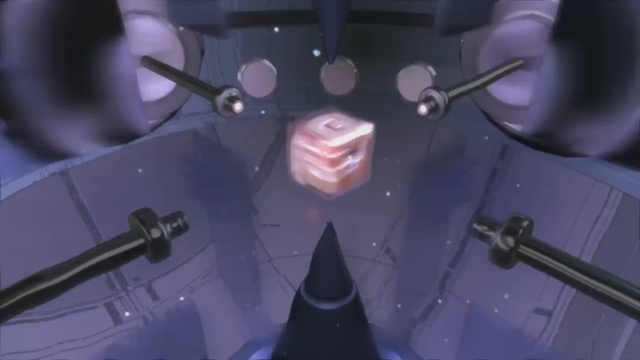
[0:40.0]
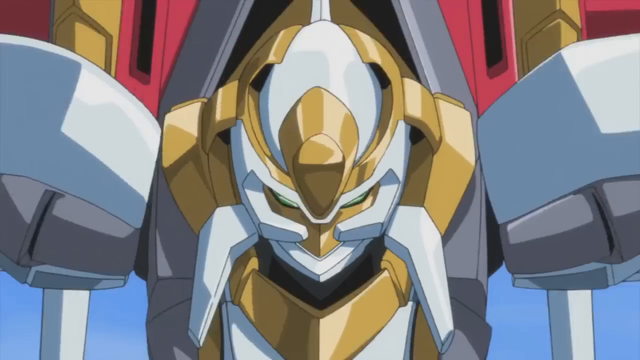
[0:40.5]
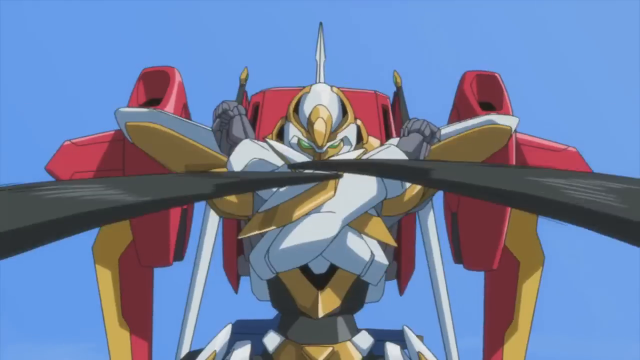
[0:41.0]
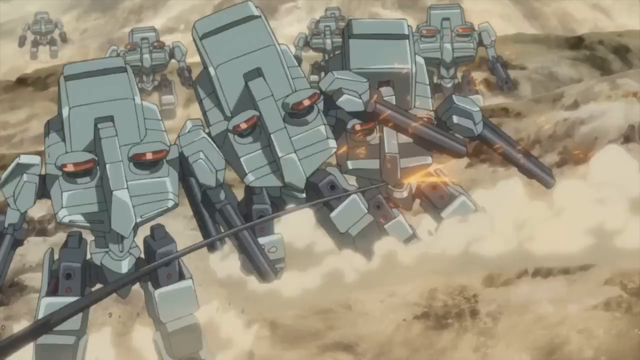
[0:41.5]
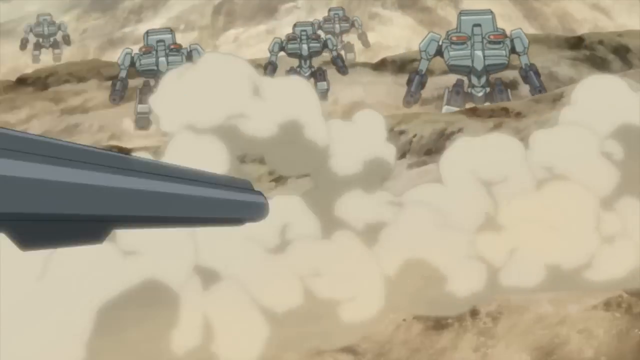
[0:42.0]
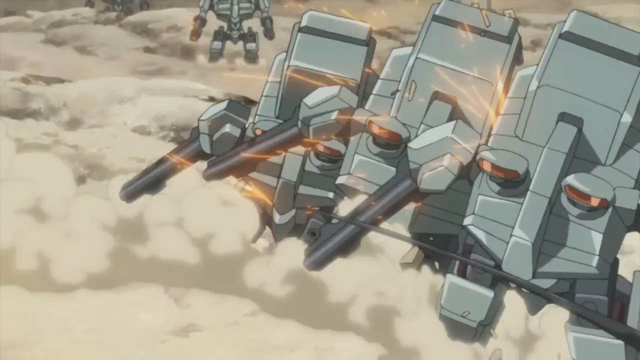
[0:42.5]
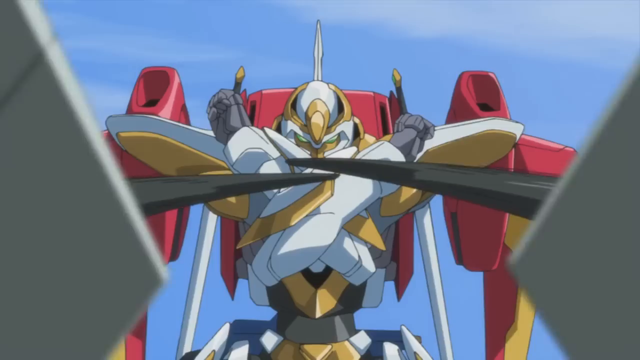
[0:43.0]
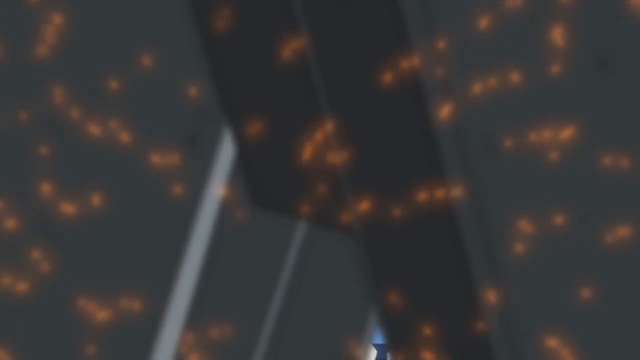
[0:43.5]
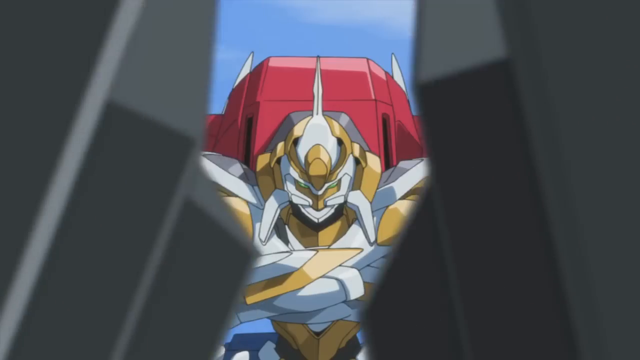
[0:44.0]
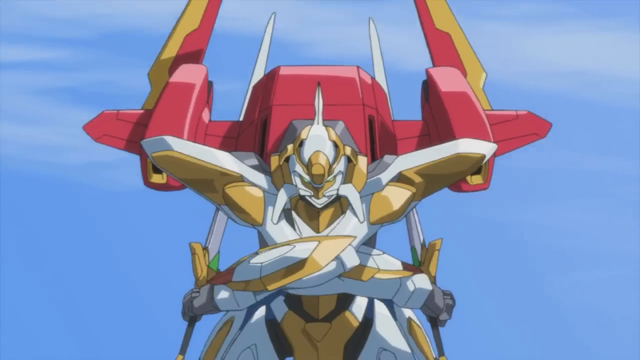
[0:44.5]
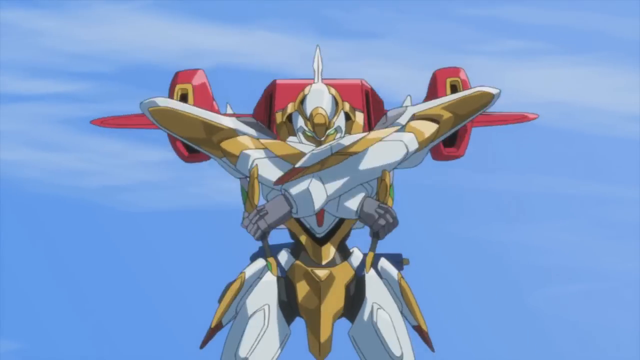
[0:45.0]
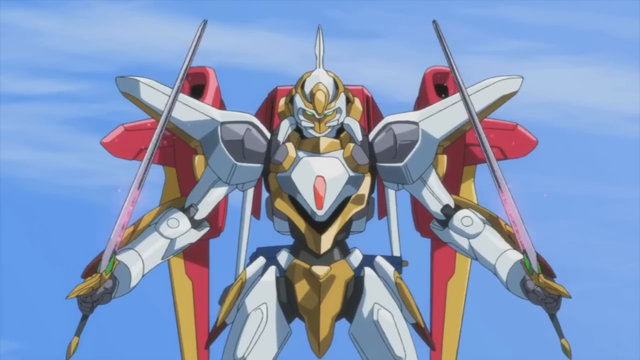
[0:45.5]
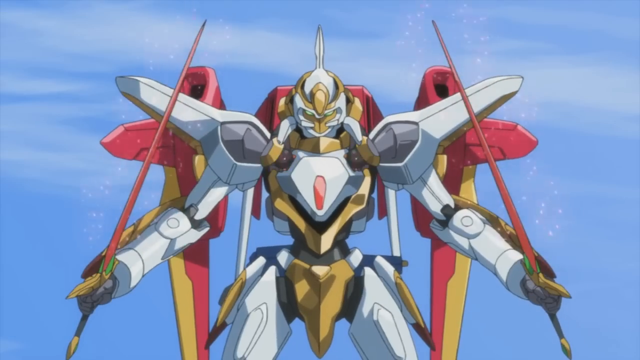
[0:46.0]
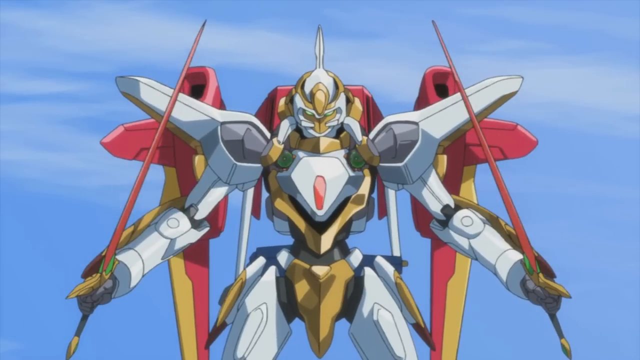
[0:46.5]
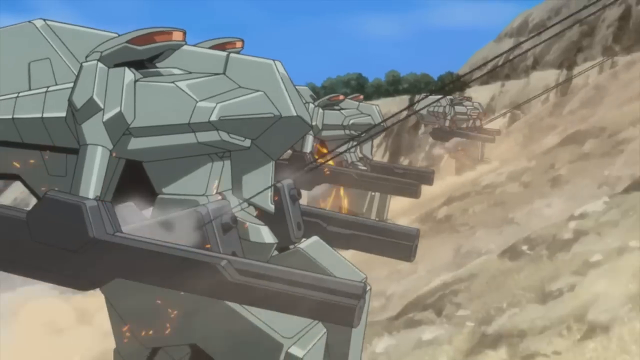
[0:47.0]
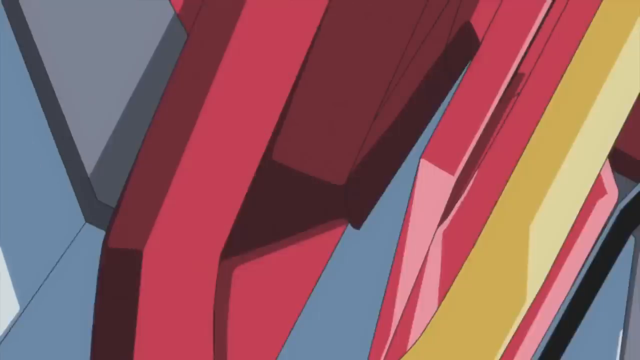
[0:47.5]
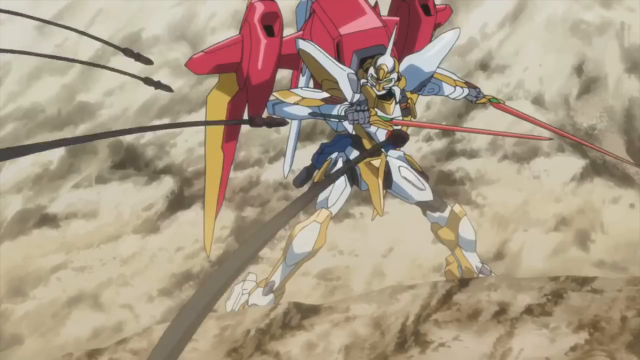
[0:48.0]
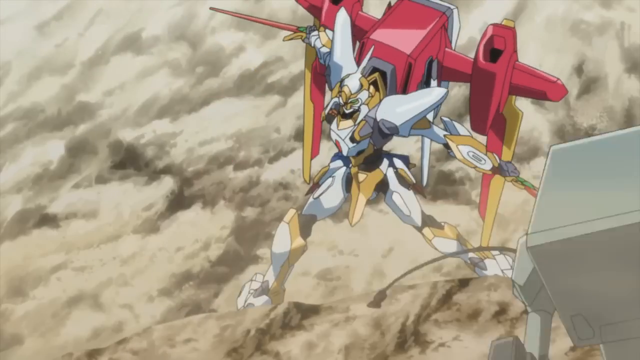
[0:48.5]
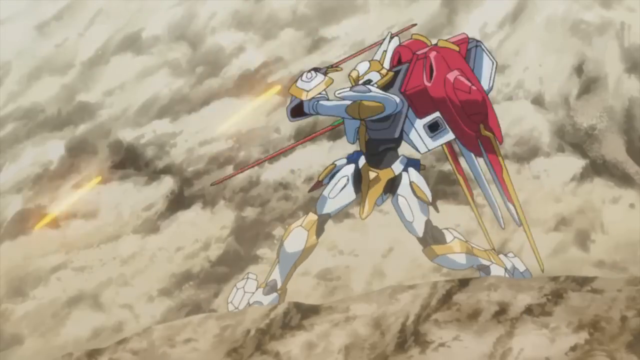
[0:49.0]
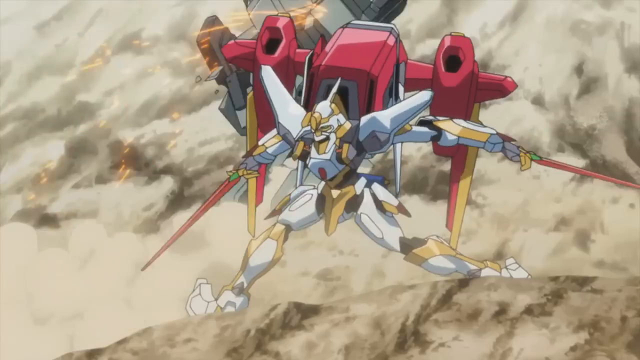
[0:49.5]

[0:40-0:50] The main anime character fights off the robot soldiers coming against him. His armor is red and yellow. With two swords in his hands, he fights the fire coming at him from the robots. Dust rises where the robots run while fighting him in the field. The robots shoot smokes of fire, and orange sparks fly. Some of the robots seem able to fly as well as they fight the one main character in the colorful robot armor suit. The fight takes place in a dirt field in daytime under a very blue sky, with the one main character going against all the different robots. A black string ejects from the enemy robots' arms to fight the main character.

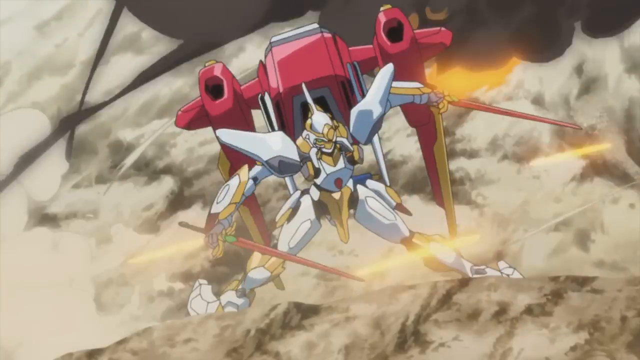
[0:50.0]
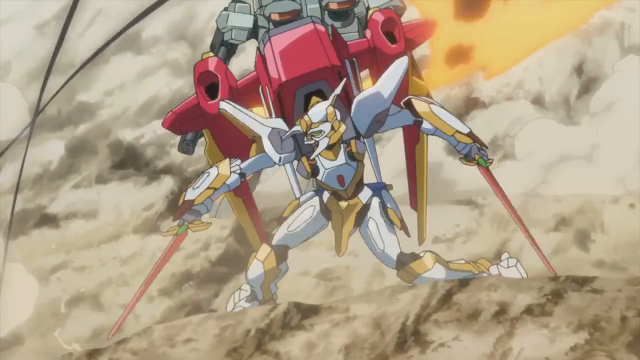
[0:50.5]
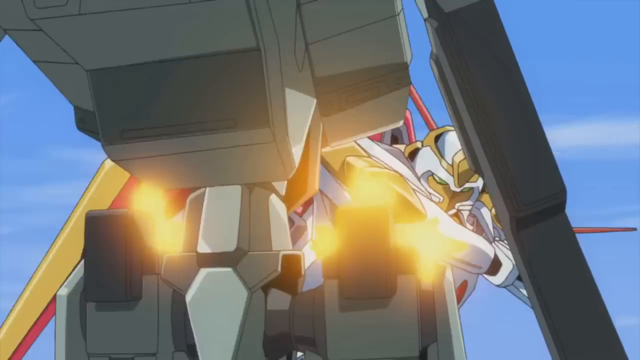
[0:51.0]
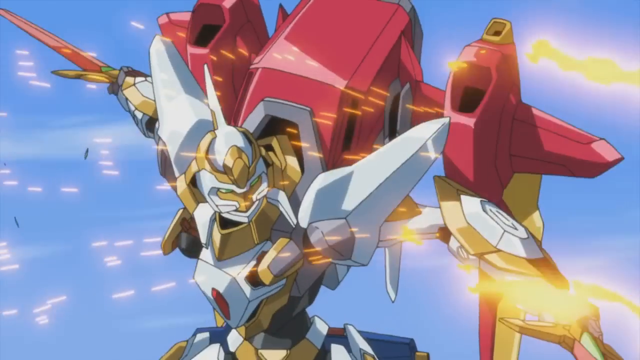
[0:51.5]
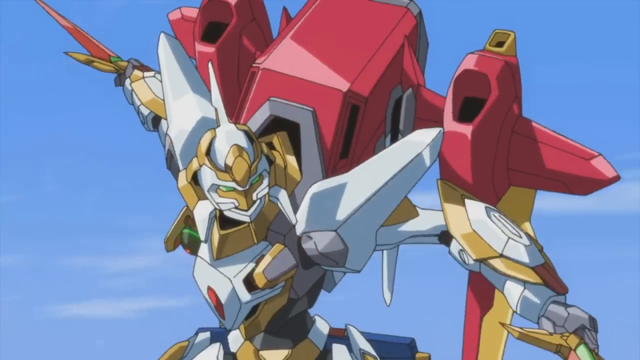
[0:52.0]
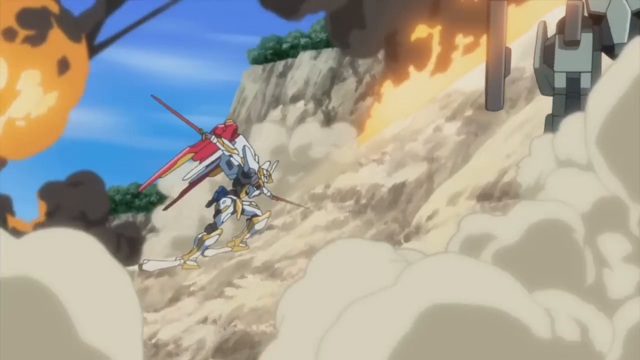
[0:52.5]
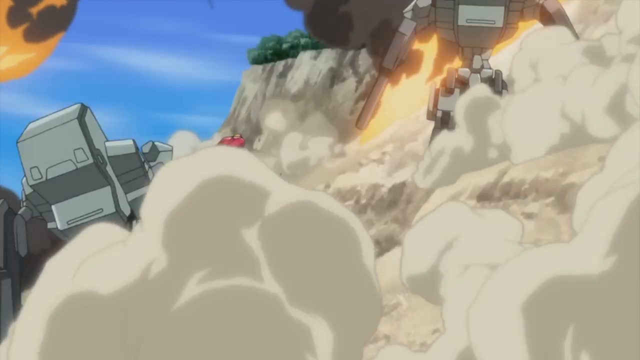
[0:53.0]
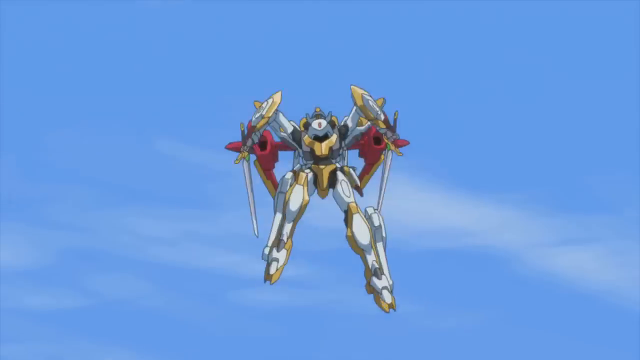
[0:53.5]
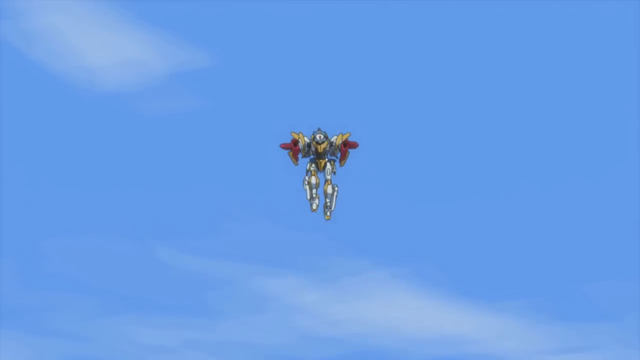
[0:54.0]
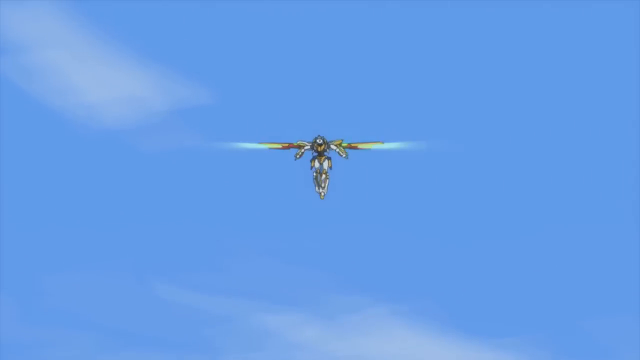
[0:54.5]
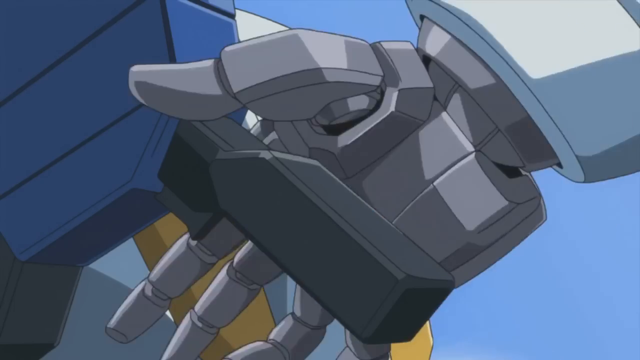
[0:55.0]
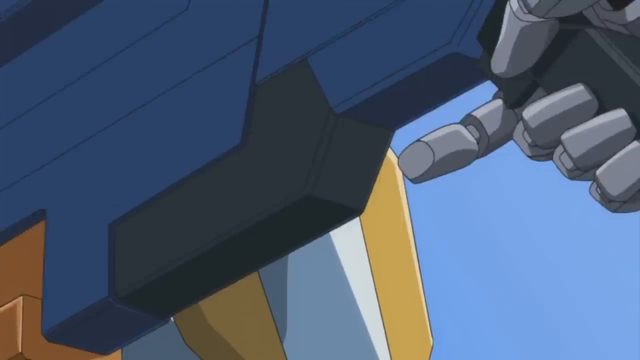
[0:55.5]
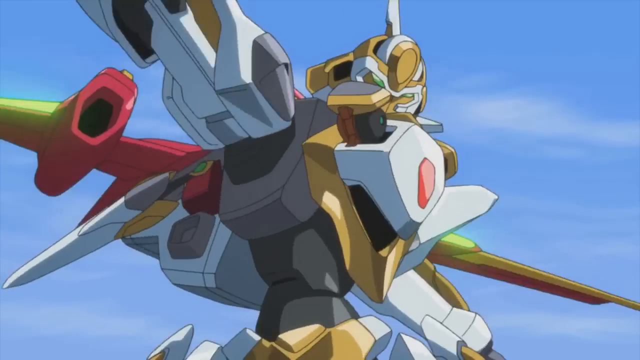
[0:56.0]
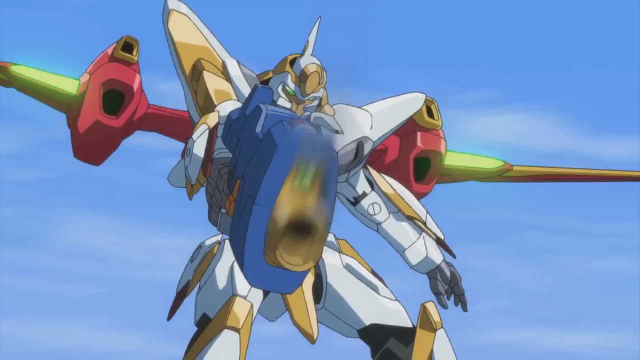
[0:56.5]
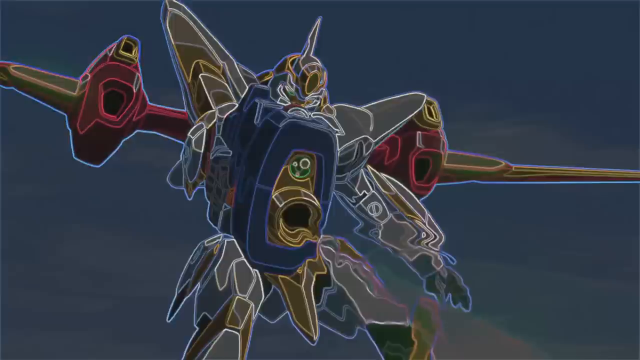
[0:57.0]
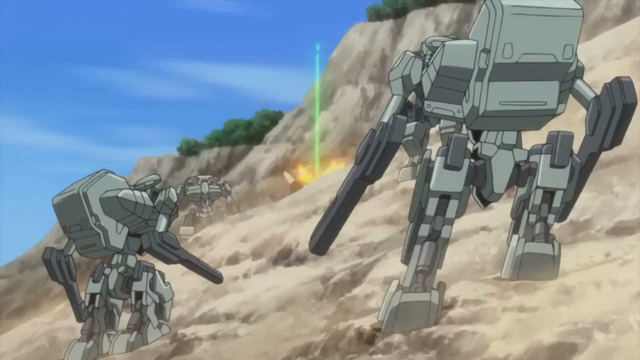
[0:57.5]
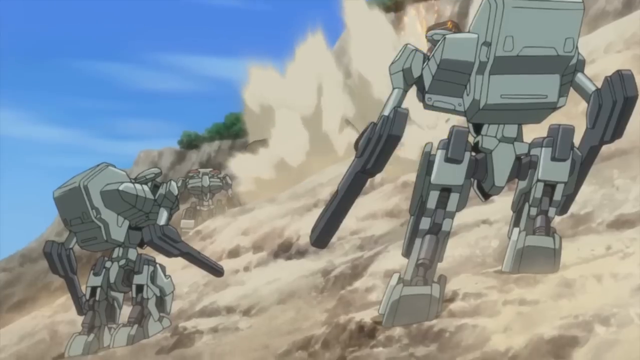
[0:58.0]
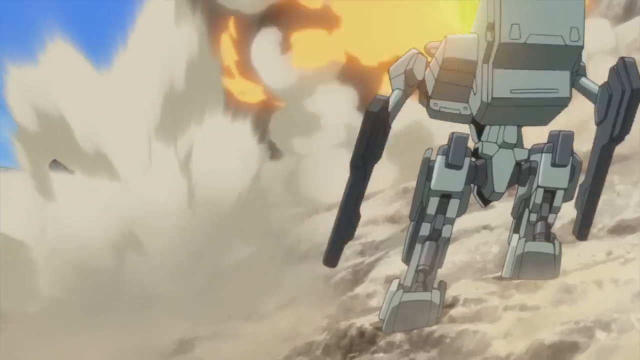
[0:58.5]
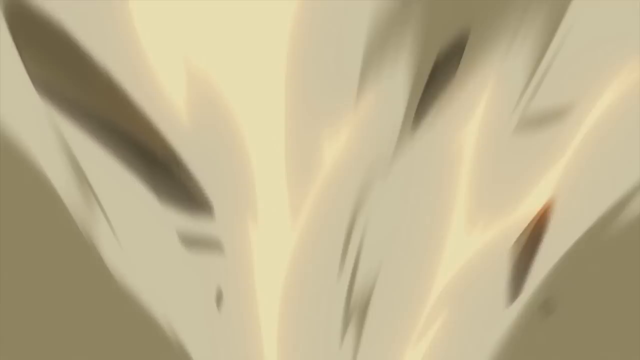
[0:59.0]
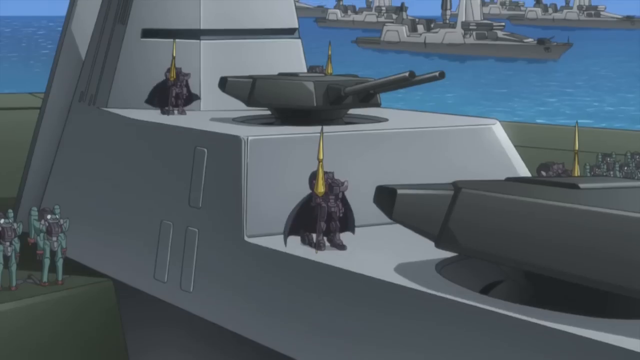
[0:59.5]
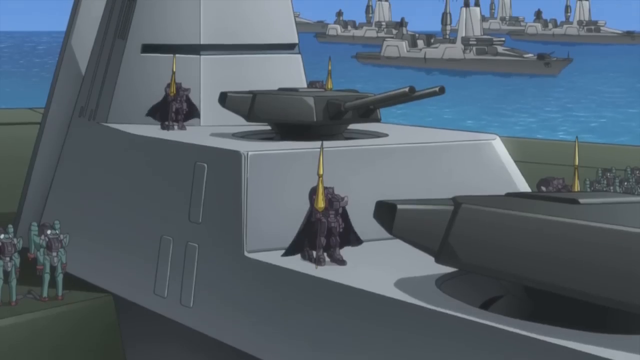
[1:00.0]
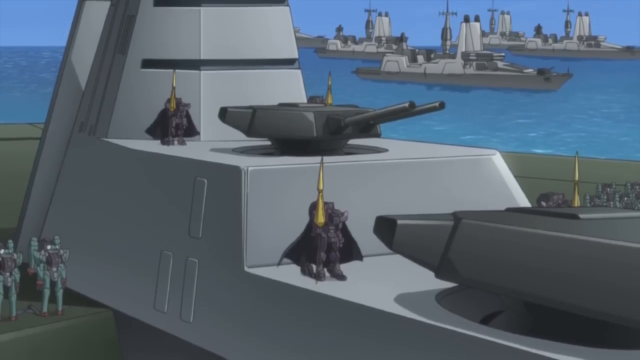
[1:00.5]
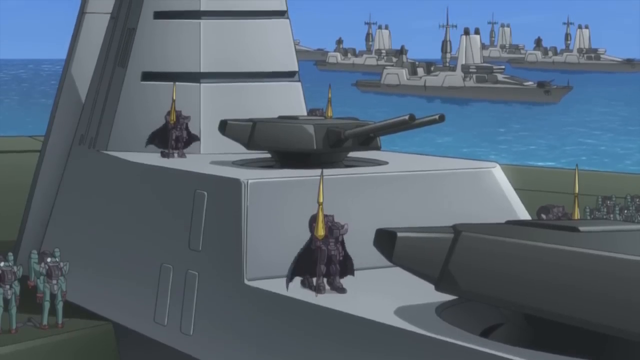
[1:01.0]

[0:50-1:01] The colorful anime character in the main robot suit apparently can shoot fire from his arm, and he fires at the many robots coming against him. He even goes into mid-air to battle. Some gray robots are on a platform, perhaps waiting to go out to the field to fight him. The robots circle him and gang up on him. He takes a blue shooter gun and aims it at the robots trying to fight him. He raises himself high into the air where they cannot reach him and starts shooting fire. The gray robots on the platform are in the water, with ships in the water a little distance off from them; perhaps they are waiting to fight as well. A gray tanker is on one of the main platforms.